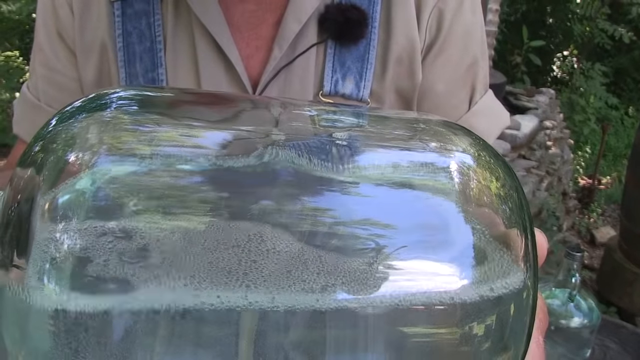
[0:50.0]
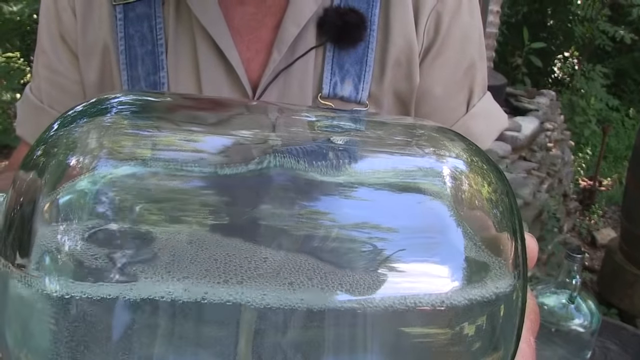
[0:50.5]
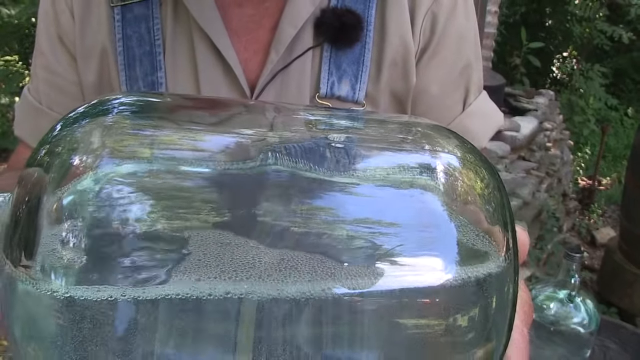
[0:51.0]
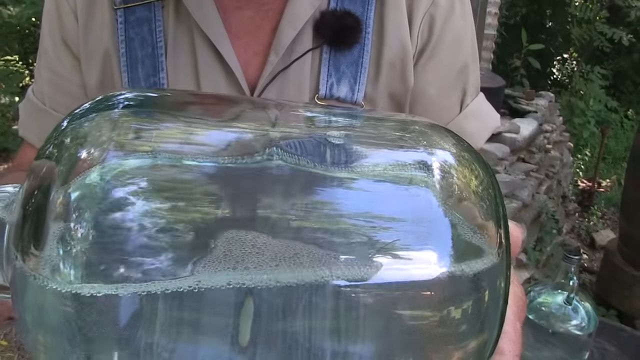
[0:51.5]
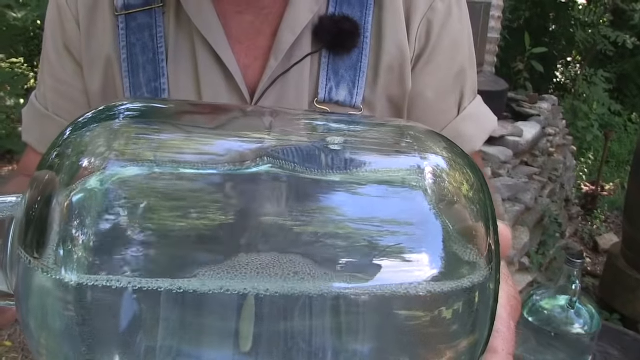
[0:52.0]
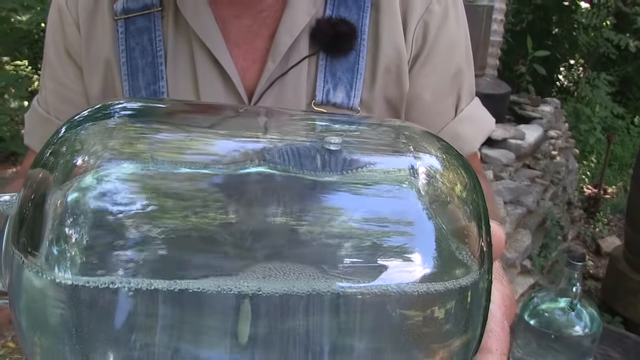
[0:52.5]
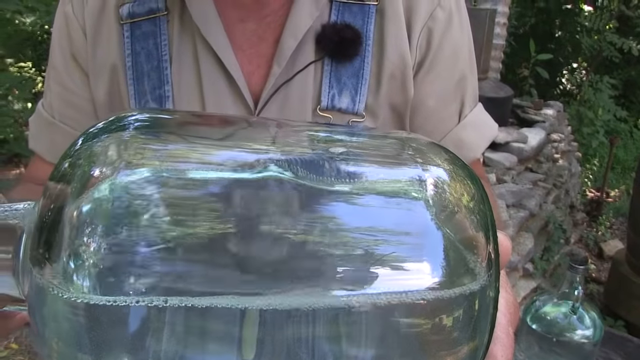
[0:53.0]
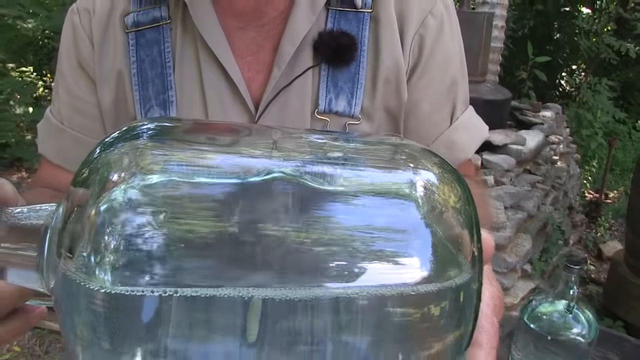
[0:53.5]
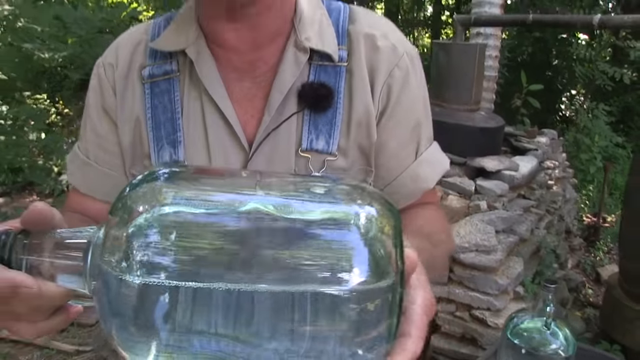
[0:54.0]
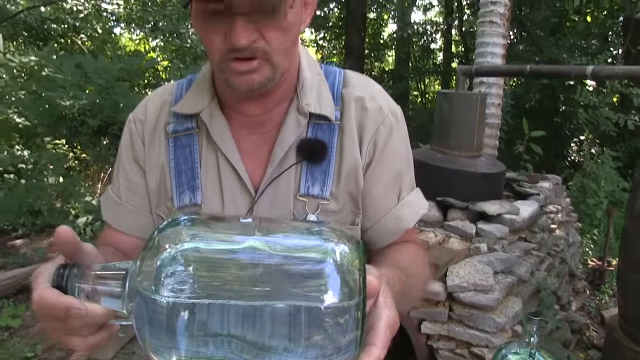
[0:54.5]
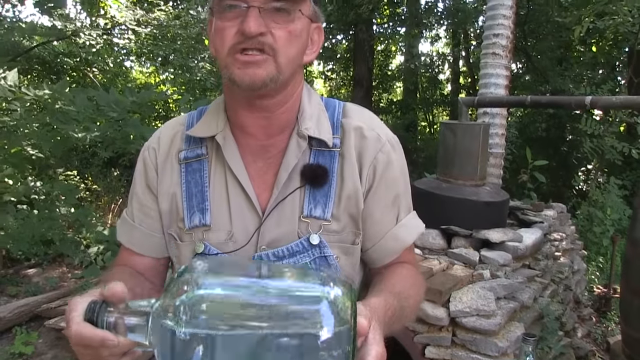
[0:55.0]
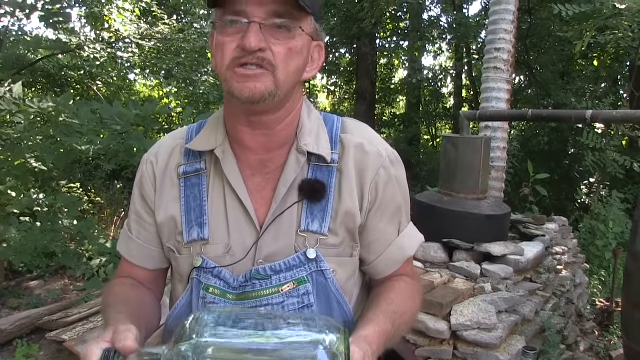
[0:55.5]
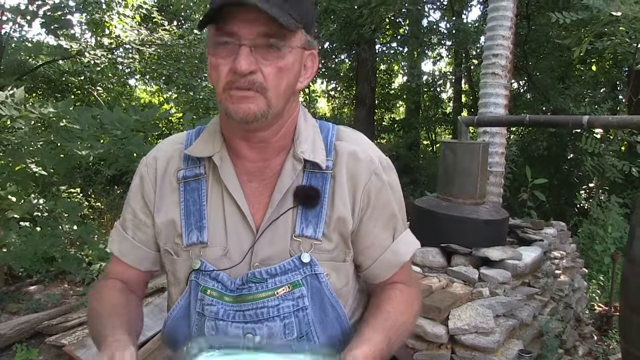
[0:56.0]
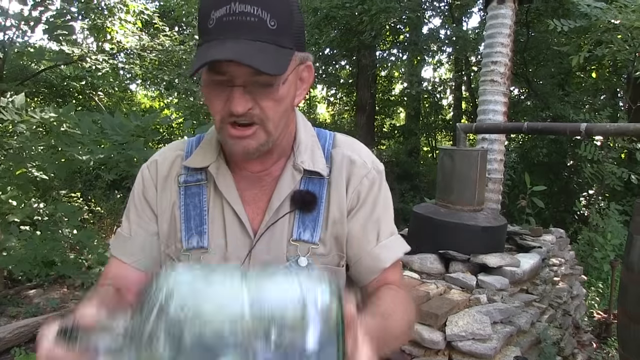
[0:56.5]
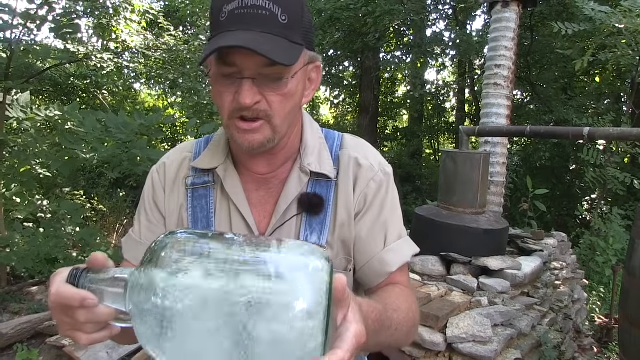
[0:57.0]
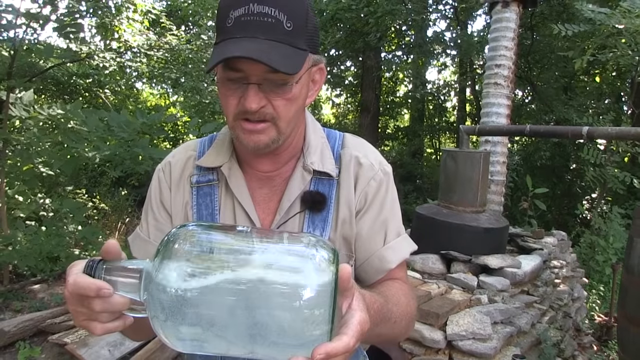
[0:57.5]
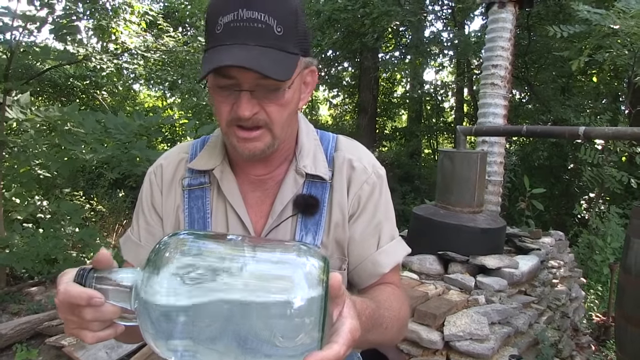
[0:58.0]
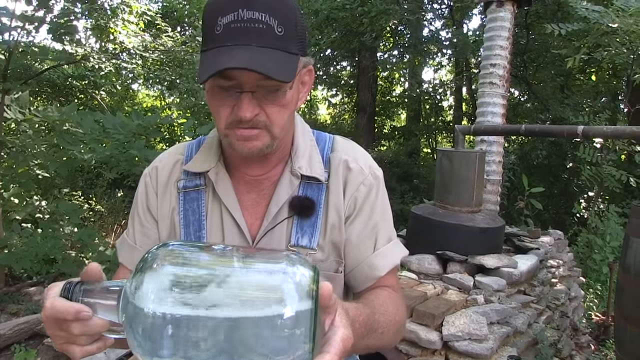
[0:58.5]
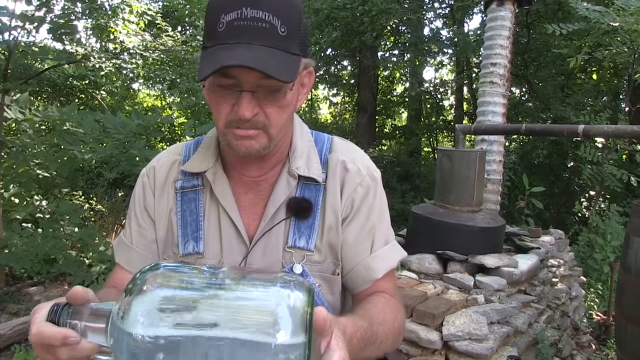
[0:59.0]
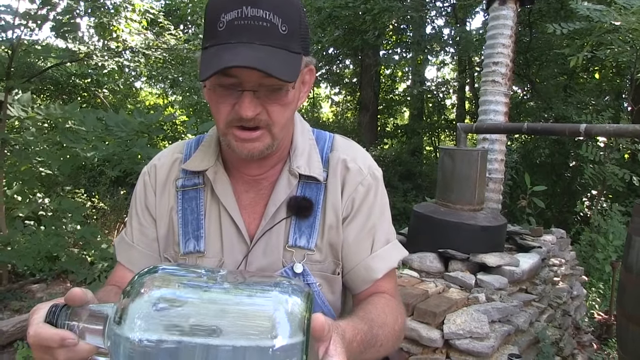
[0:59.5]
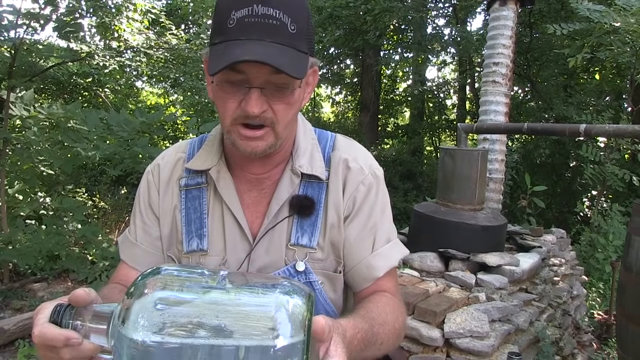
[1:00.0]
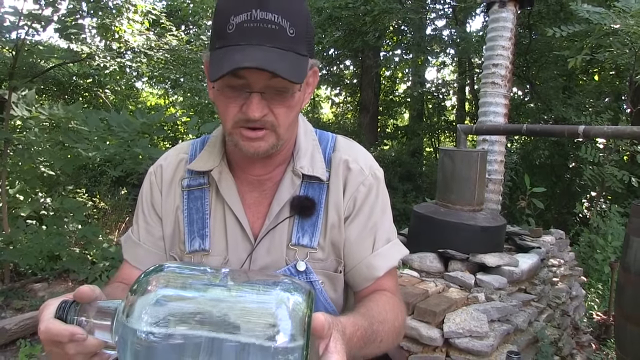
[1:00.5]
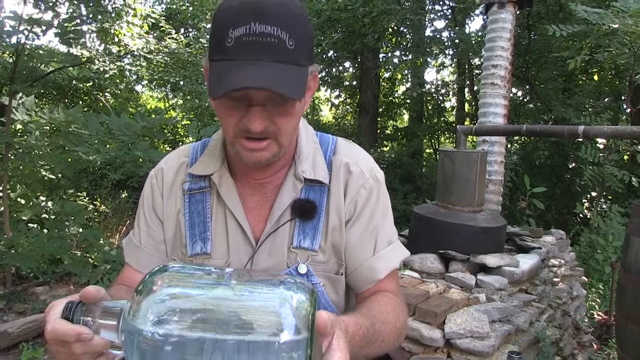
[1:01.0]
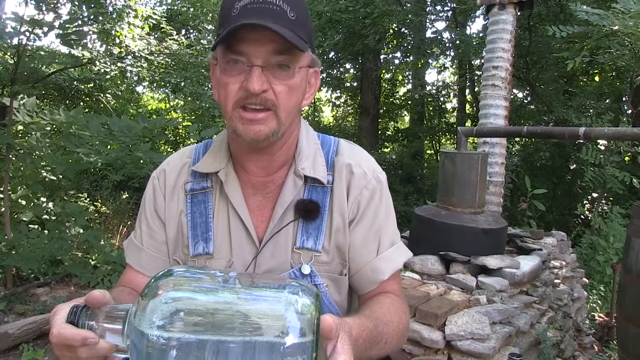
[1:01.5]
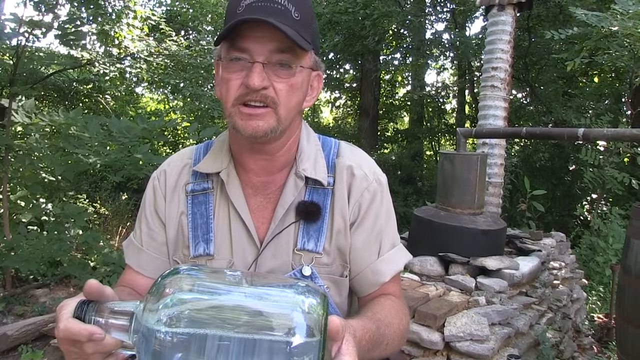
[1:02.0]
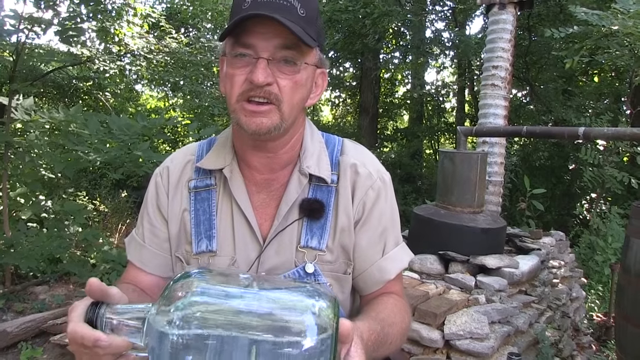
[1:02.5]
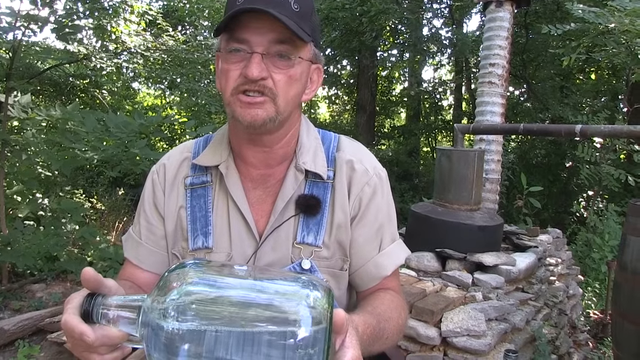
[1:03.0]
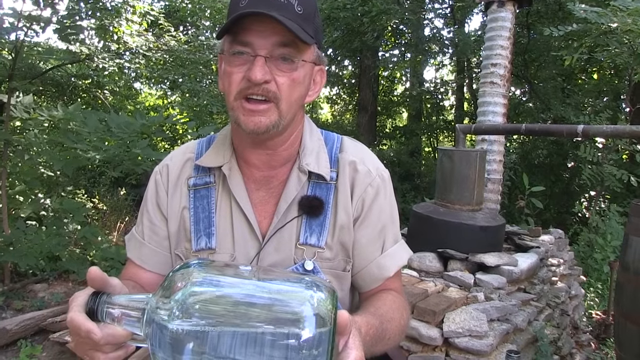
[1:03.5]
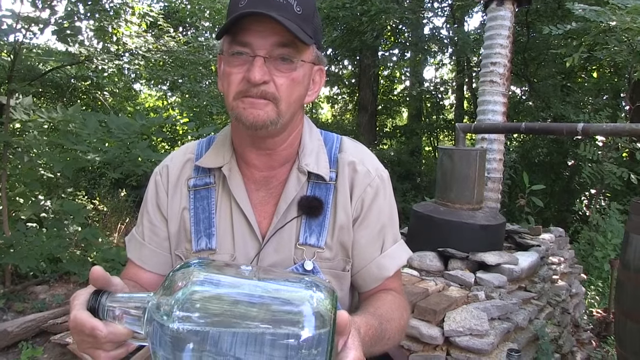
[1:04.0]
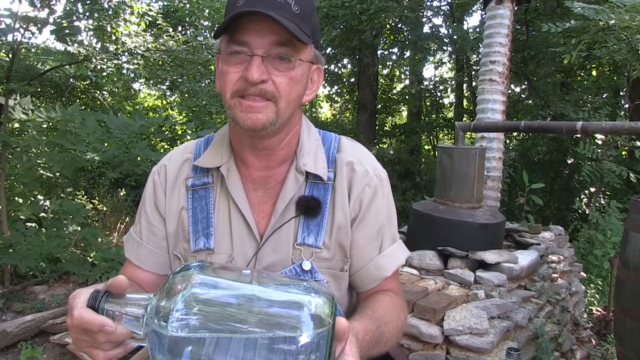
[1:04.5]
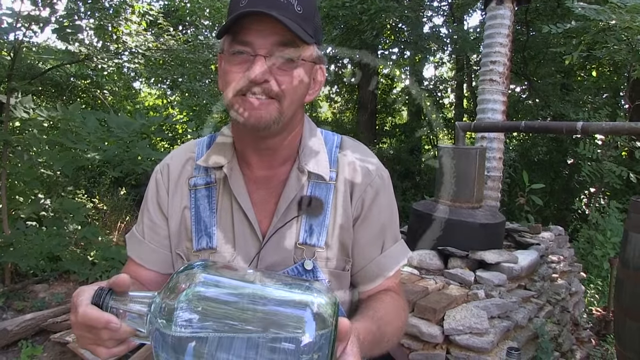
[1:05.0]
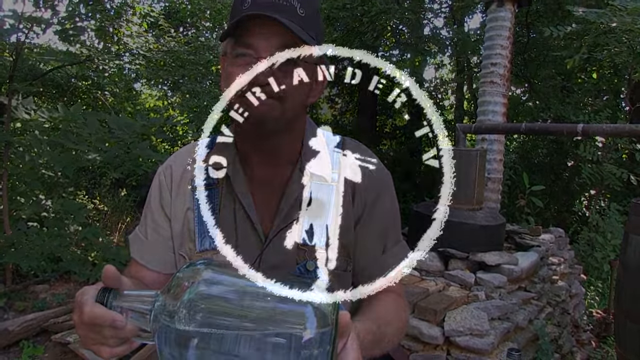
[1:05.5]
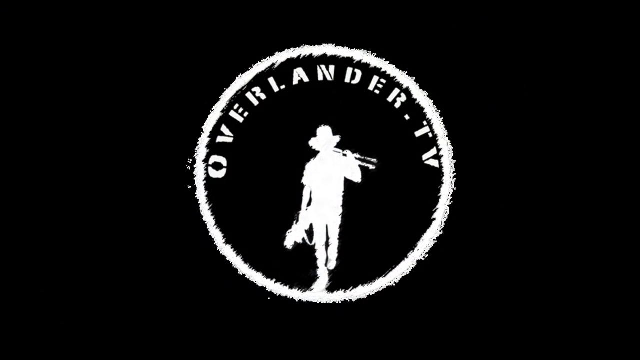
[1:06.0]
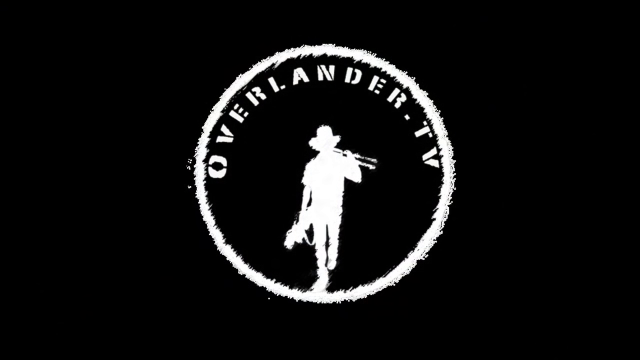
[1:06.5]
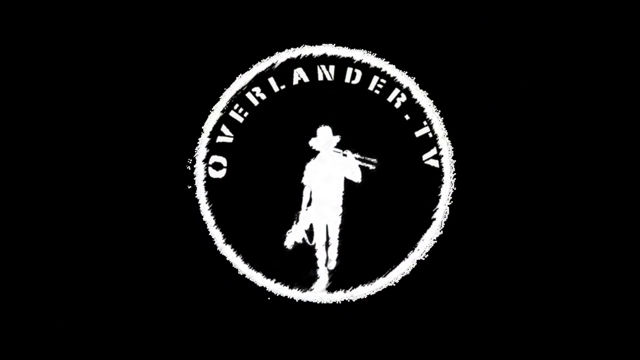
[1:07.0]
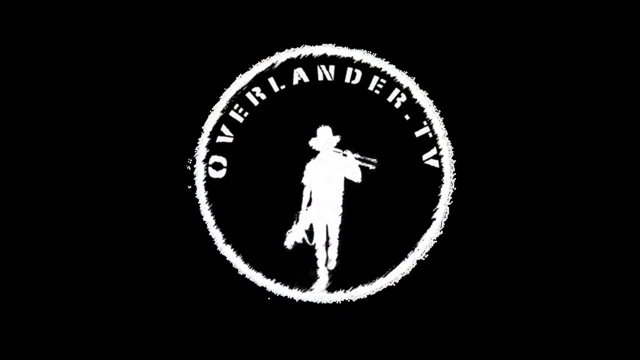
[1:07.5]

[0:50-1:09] The man appears fixated on one of the containers and gives it a good shake. He is presumably explaining why one is better or worse in quality than the other, and seems to be assessing the quality and showing how to tell the two apart. As he finishes, the video pans out to what appears to be the channel's logo, which reads "Overlander TV" and features a white silhouette of a man walking.